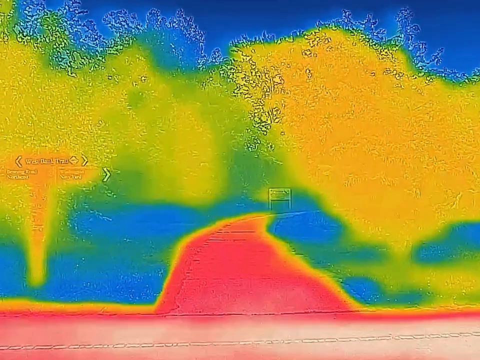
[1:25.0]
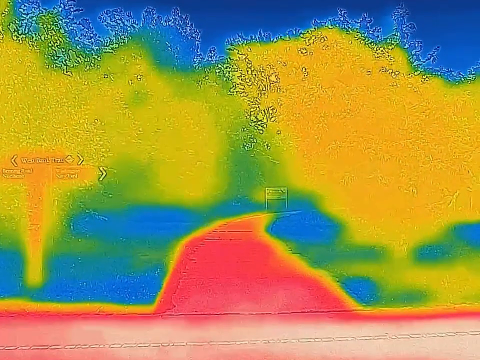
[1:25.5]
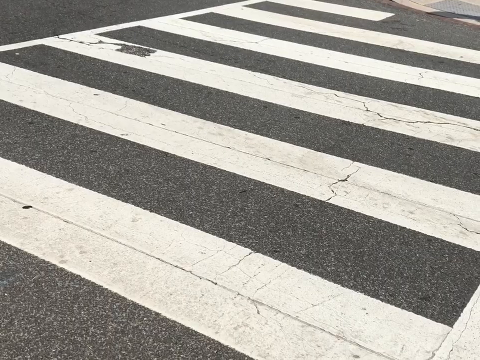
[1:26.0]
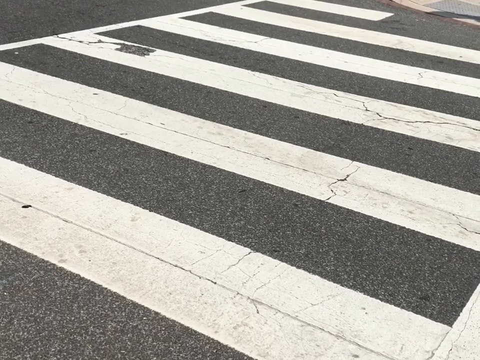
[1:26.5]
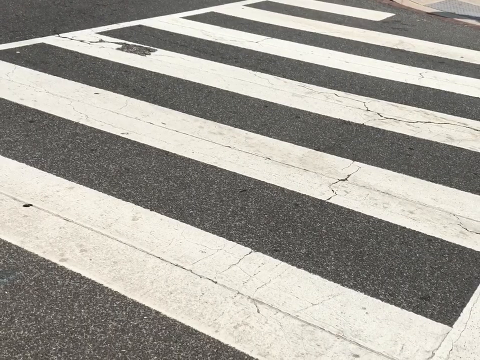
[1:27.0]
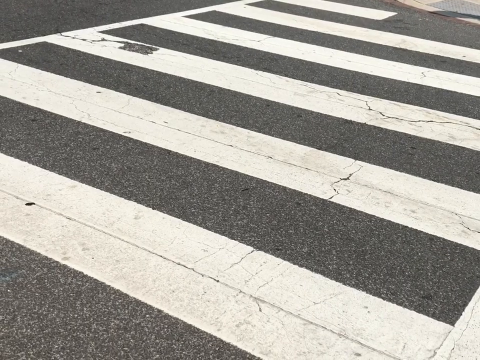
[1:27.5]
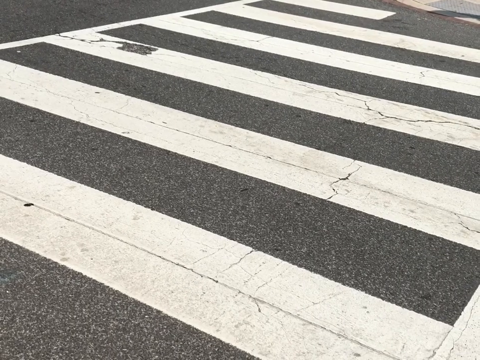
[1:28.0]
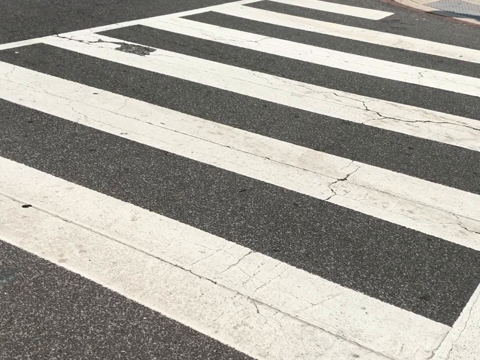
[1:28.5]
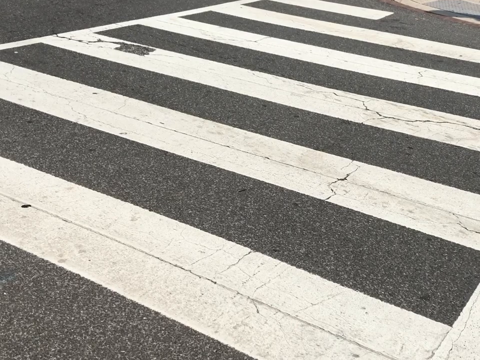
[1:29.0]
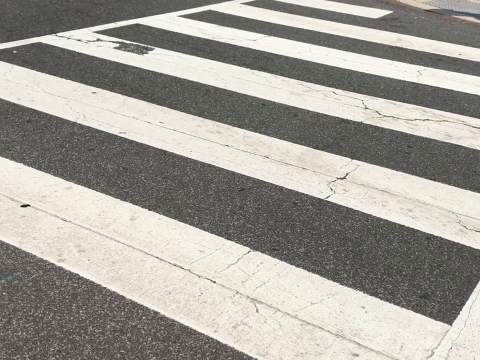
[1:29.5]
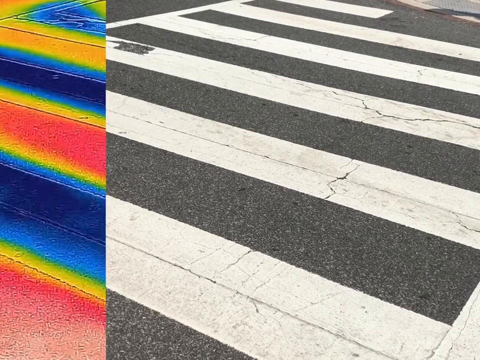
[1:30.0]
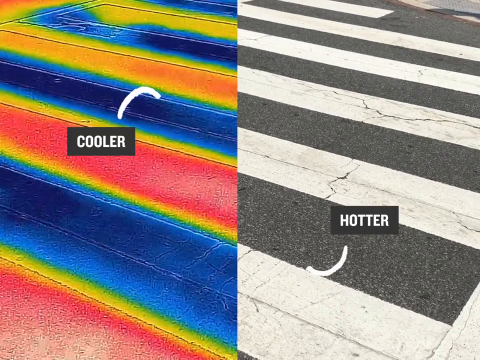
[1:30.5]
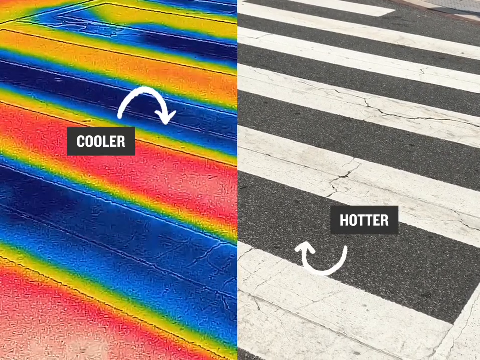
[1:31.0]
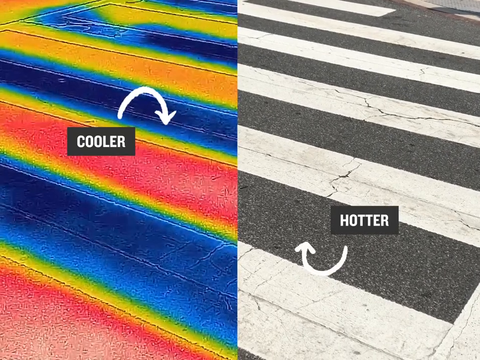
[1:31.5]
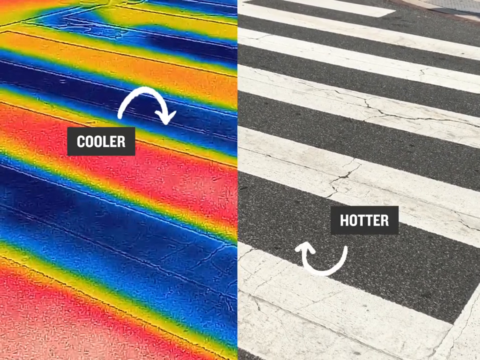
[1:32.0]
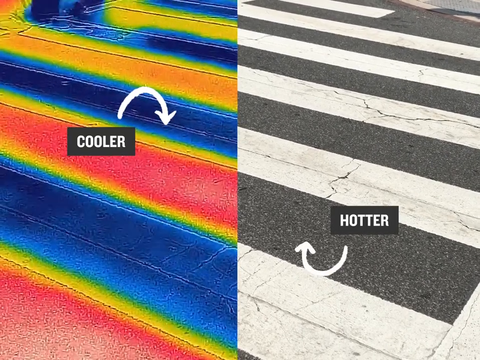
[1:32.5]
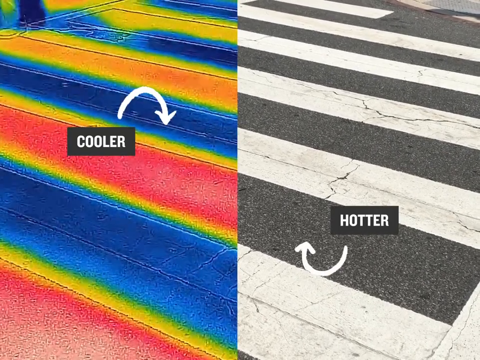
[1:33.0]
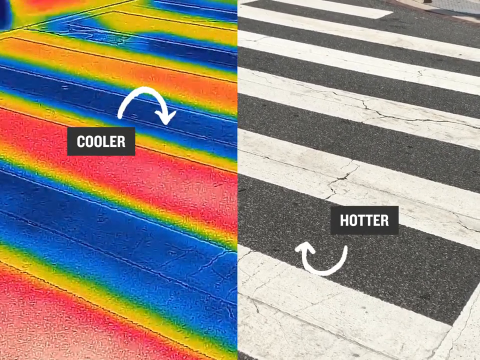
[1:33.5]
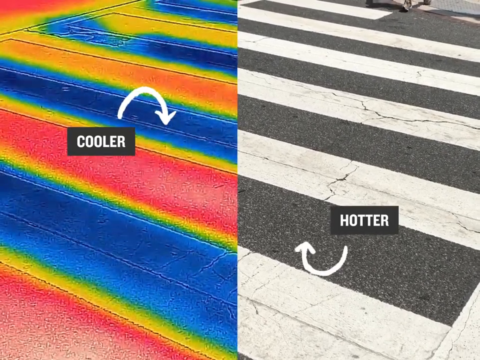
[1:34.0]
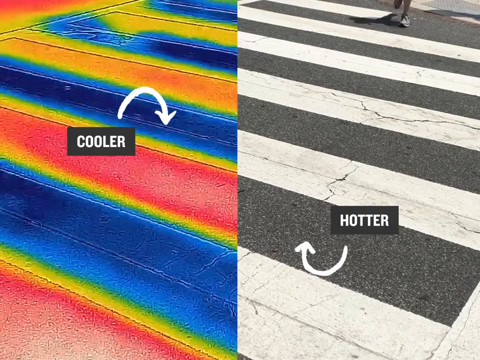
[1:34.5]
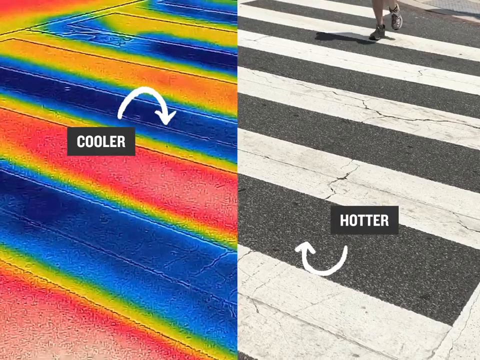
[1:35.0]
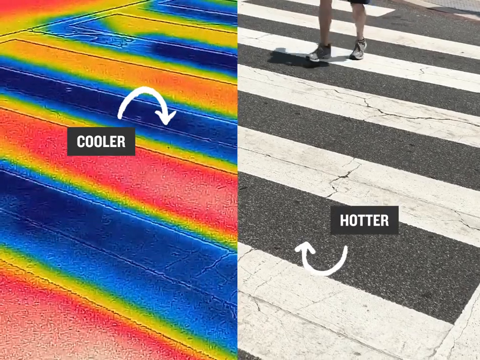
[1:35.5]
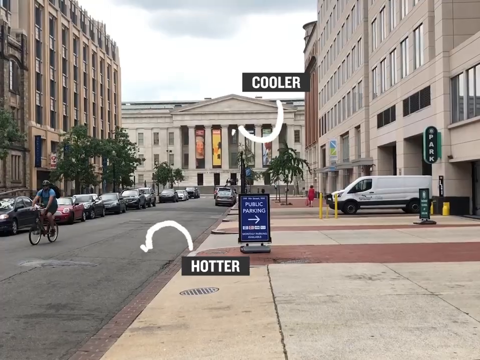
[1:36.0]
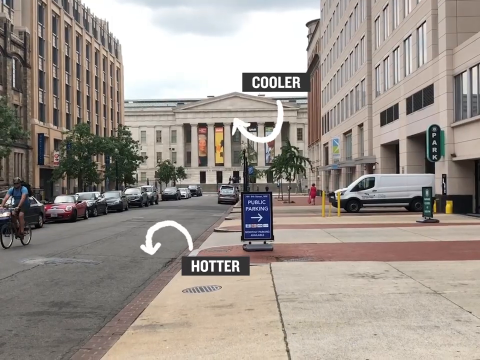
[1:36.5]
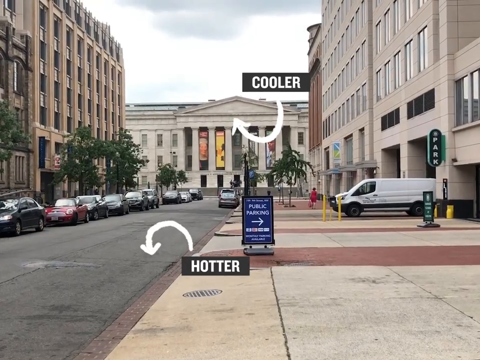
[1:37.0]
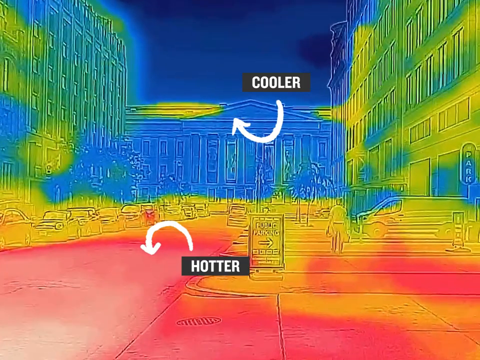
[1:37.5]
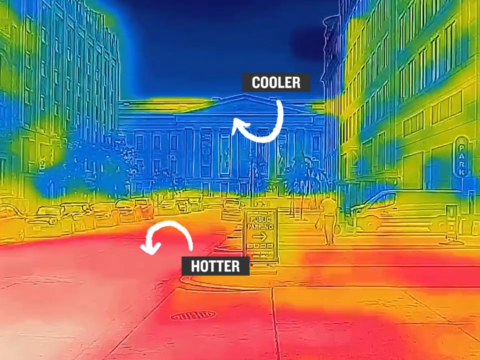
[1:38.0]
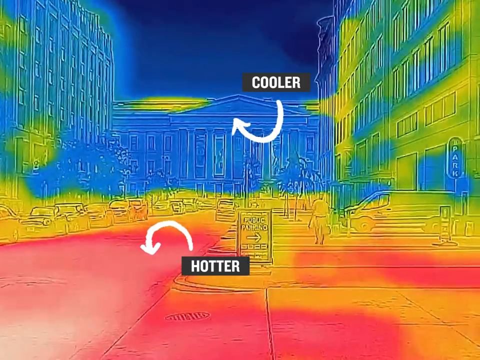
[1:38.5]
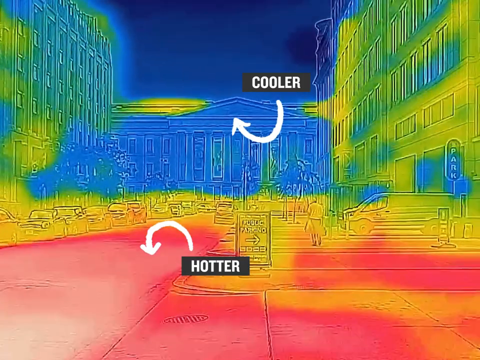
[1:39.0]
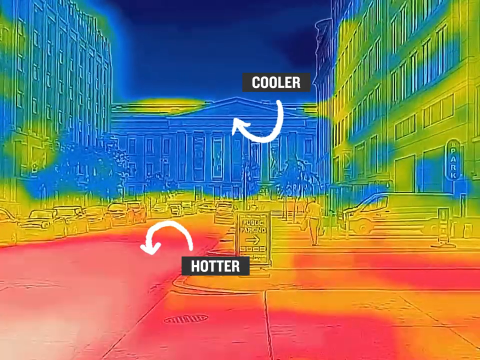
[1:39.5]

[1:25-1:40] The West Bank Trail entrance appears briefly with the heat map effect and a small heat wave drawn on top. The scene changes to an asphalt crosswalk: gray asphalt with white lines across it, which looks old, with some cracks in the paint and the asphalt. It holds for about three seconds before a heat map effect is applied to half the screen. On the heat map half, an arrow points to the white lines and says "cooler"; on the half with no effect, an arrow points to the asphalt and says "hotter," showing the temperature difference between the two materials. The video then switches to a smaller road with buildings and cars parked on the side, seemingly in the middle of a city, with the heat map effect on top; an arrow points to the asphalt road saying "hotter," and another points to a white building saying "cooler."